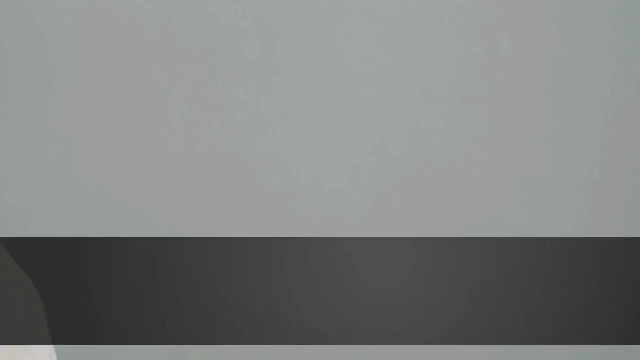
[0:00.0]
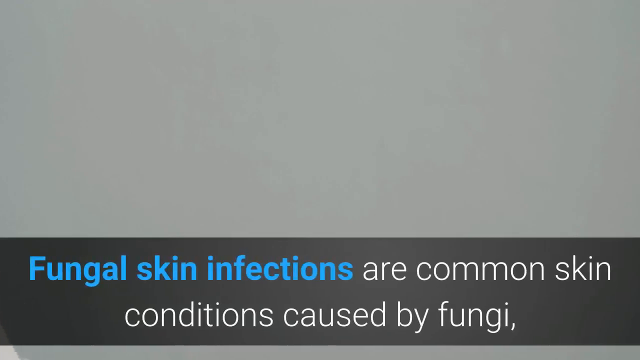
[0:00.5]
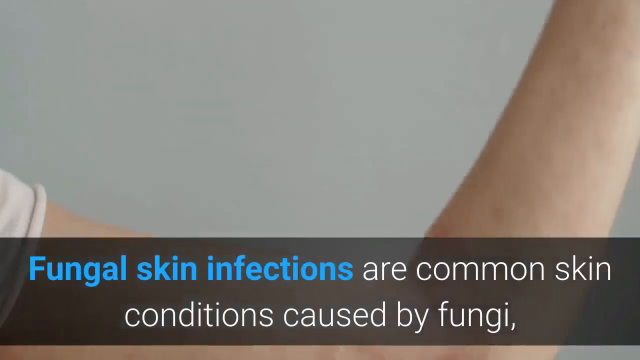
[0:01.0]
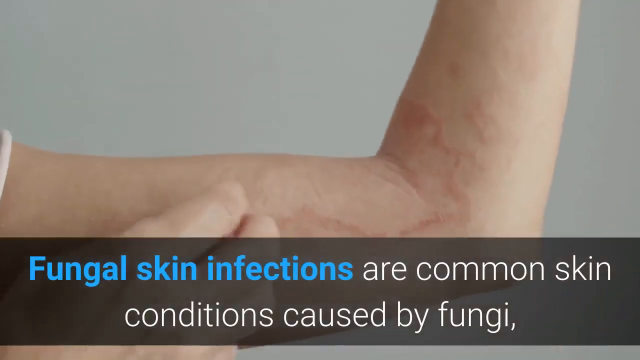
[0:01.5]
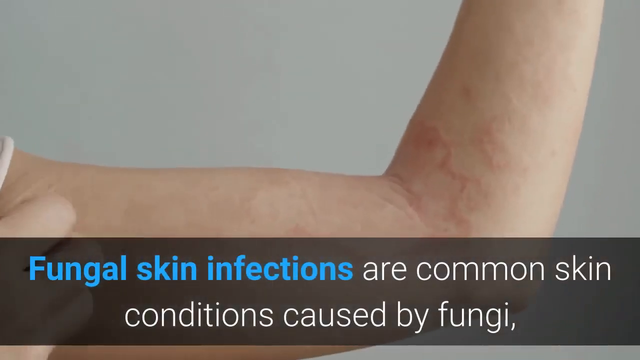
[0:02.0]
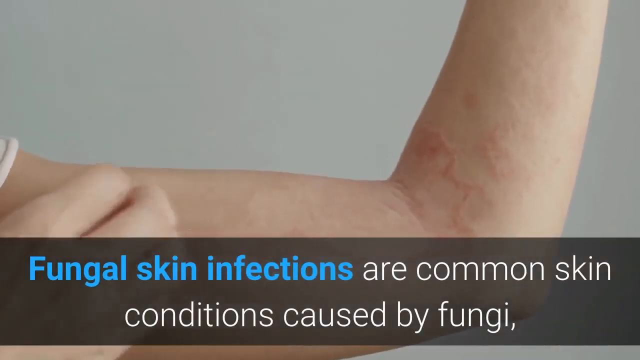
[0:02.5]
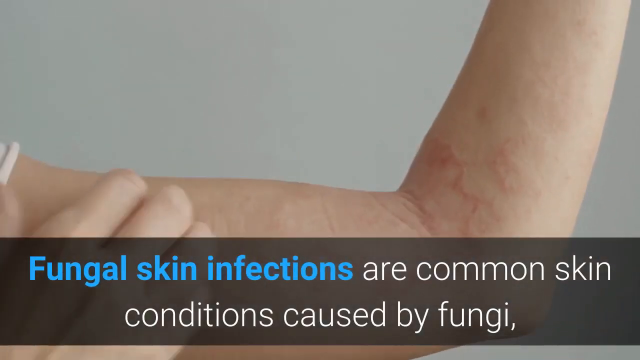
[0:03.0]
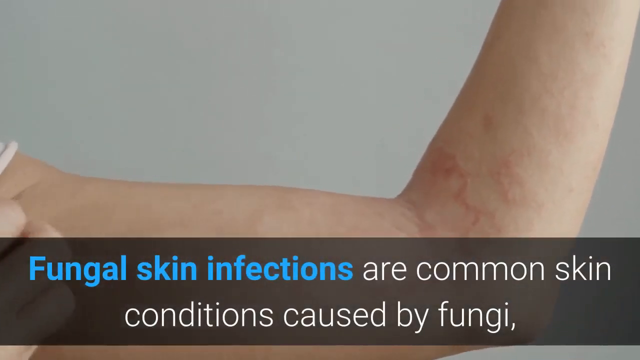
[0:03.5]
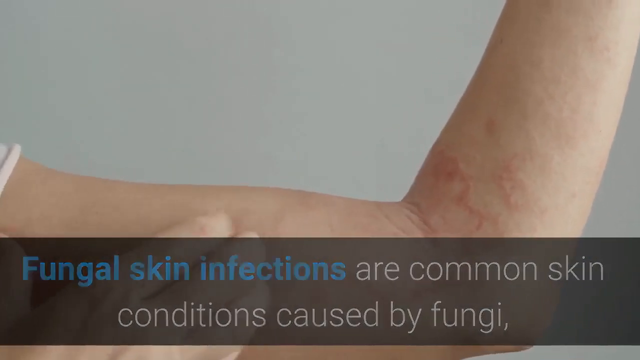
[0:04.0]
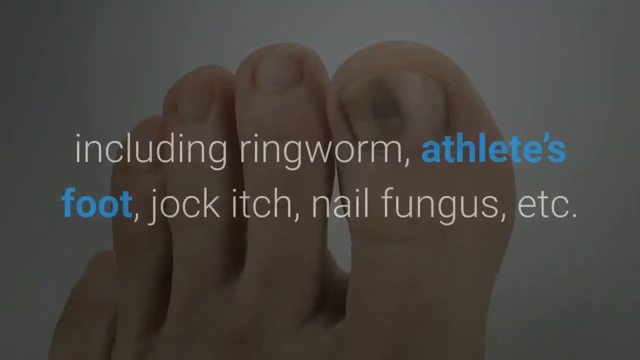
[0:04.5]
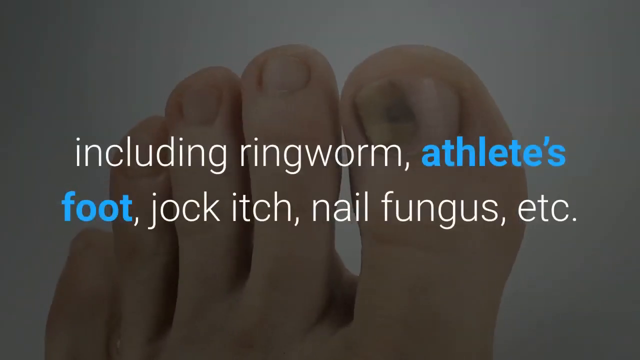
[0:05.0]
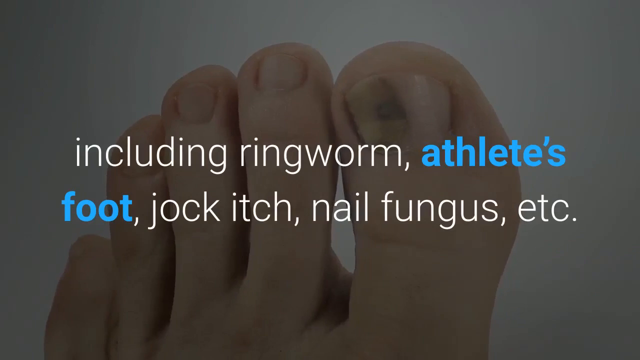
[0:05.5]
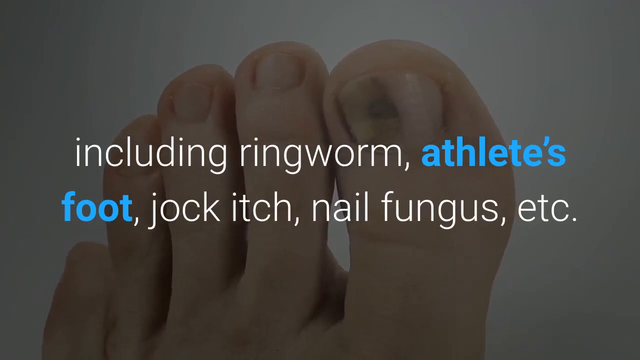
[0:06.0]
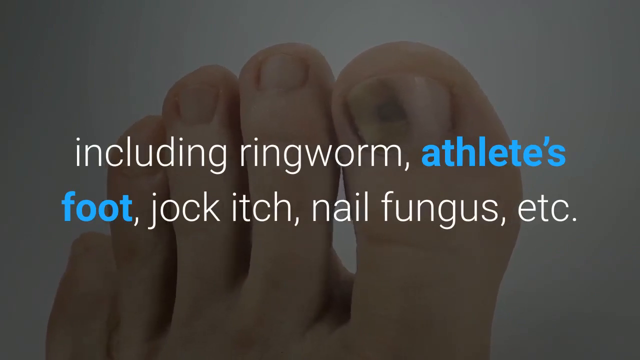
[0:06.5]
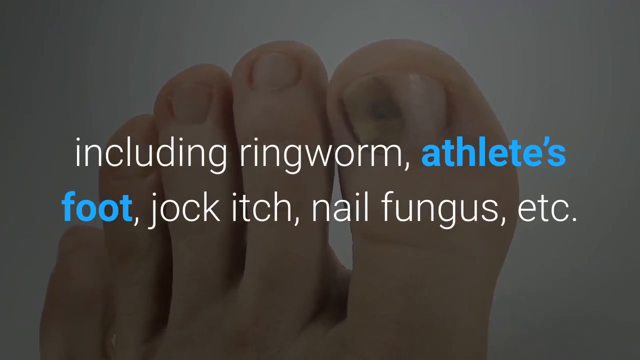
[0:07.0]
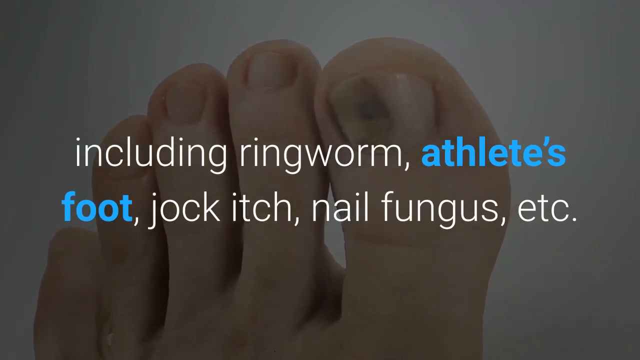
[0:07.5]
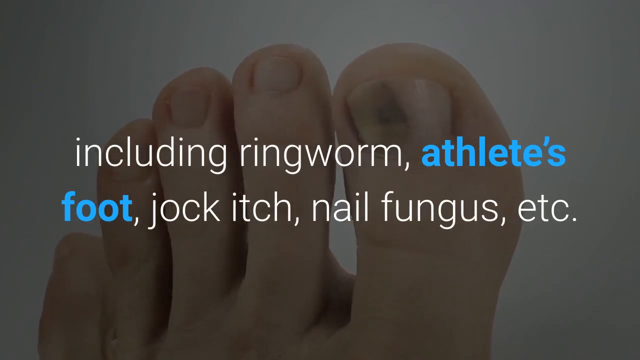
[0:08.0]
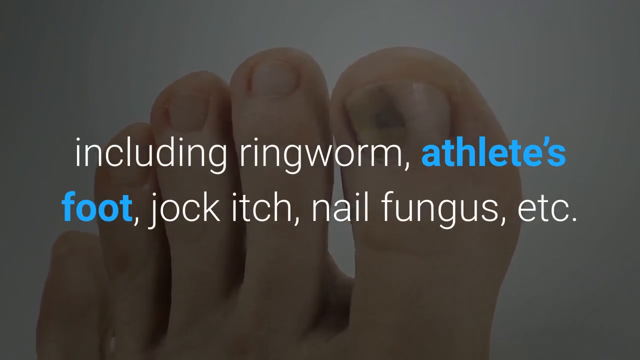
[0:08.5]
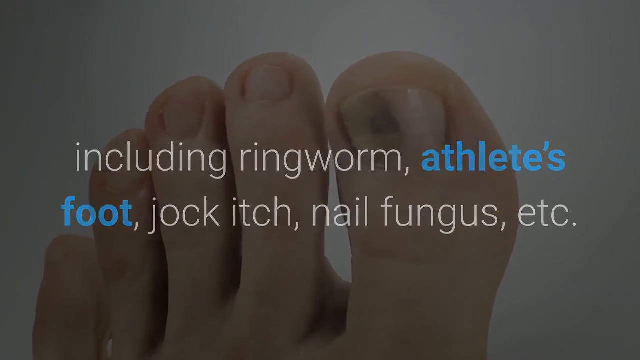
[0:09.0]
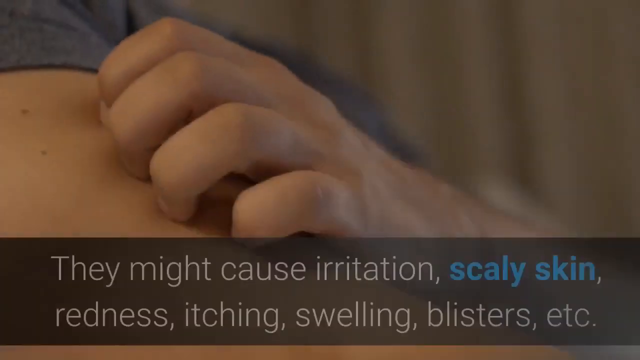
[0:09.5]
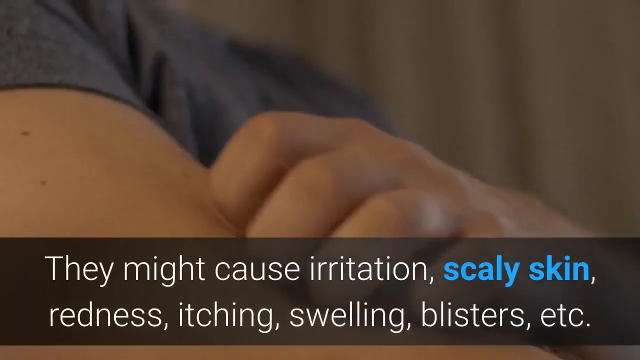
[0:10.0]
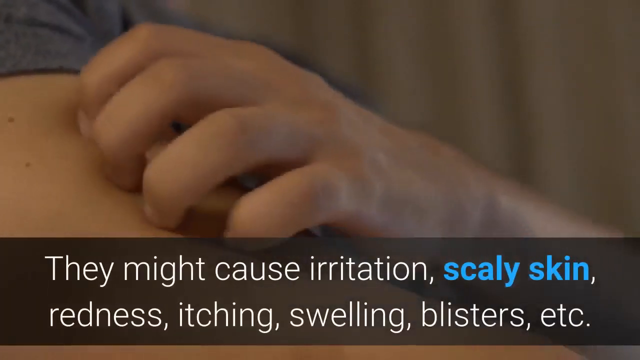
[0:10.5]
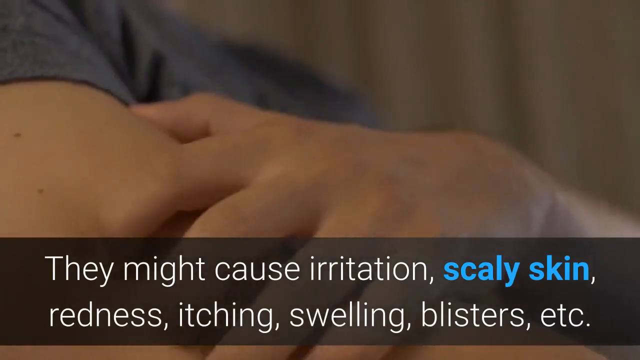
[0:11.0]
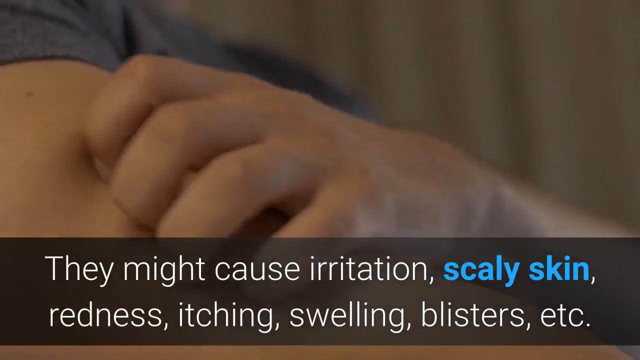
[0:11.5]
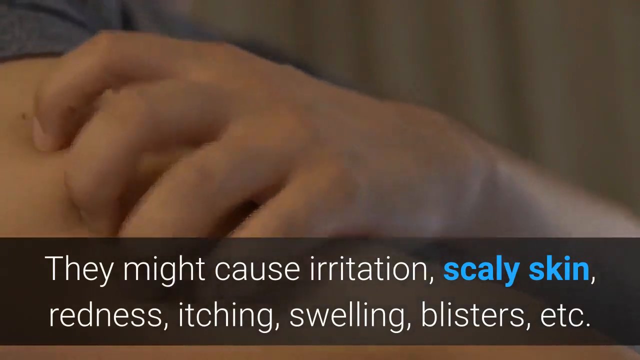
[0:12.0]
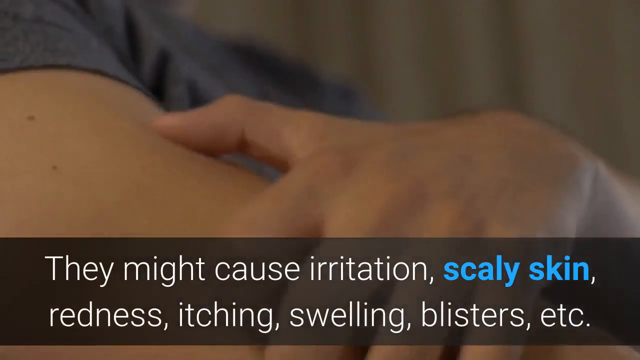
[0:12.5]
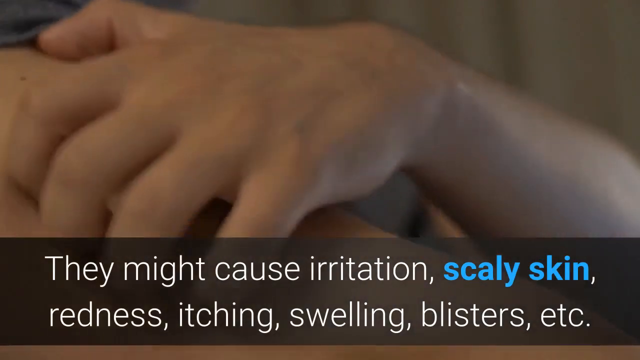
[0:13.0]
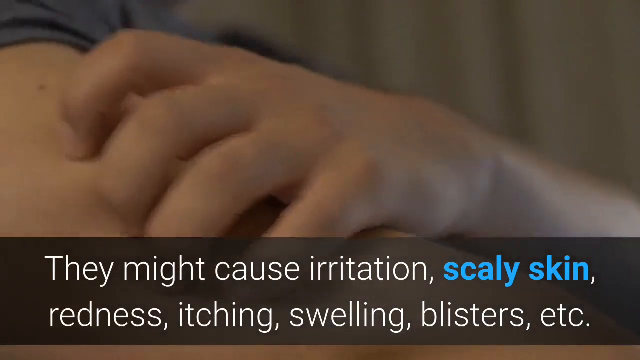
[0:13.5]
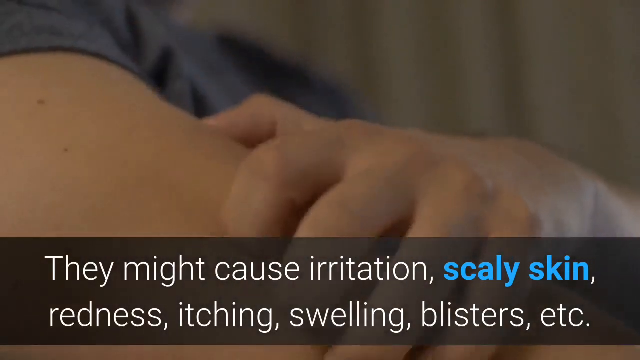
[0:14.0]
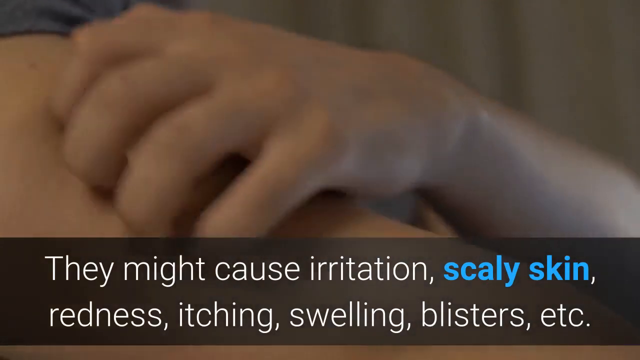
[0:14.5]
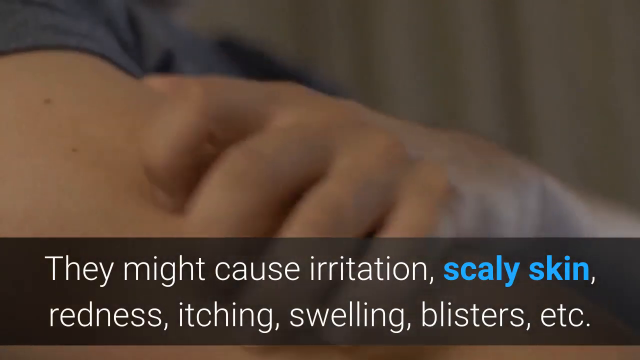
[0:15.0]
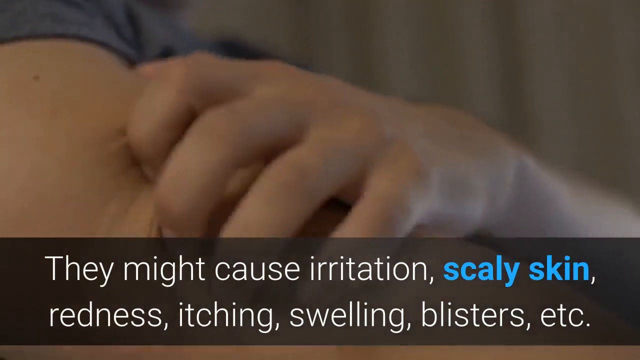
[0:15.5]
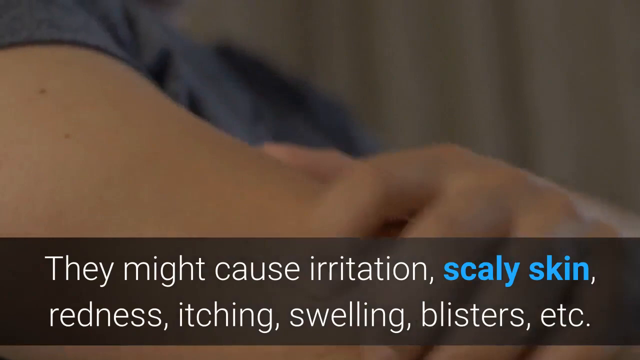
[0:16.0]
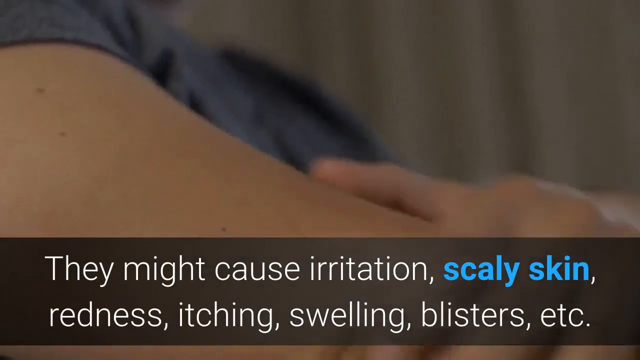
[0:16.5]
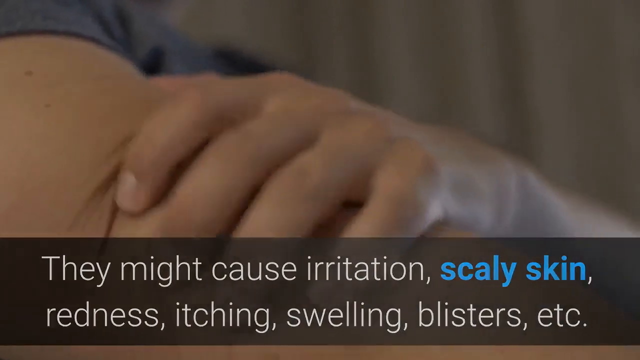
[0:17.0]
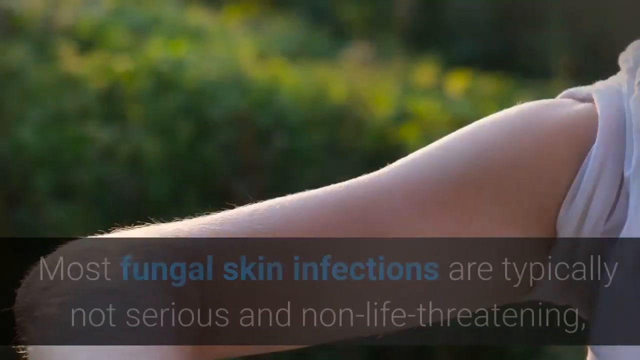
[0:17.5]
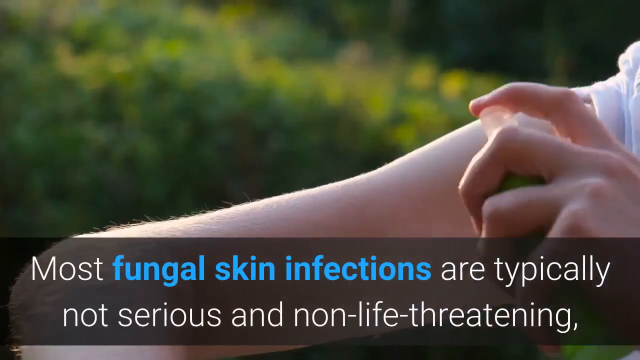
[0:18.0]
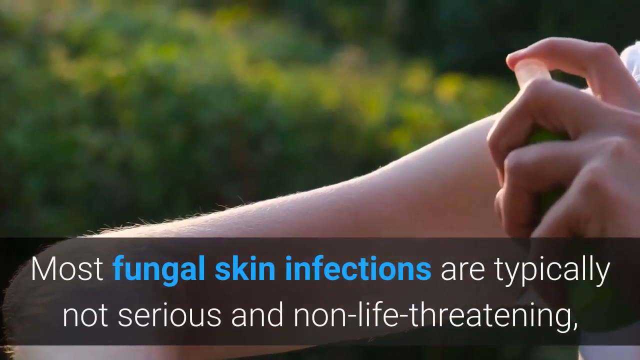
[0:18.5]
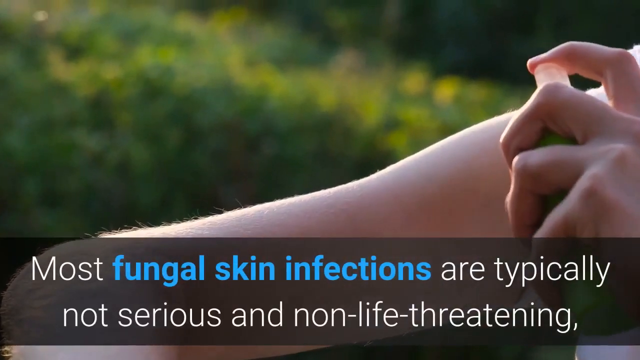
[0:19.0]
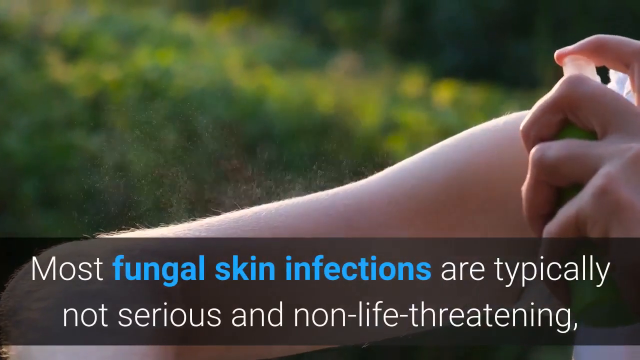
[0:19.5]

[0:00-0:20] Text and then video appear. A black banner at the bottom reads "fungal skin infections are common skin conditions caused by fungi", with "fungal skin infections" in blue and the rest in white. Behind the text is a person's arm, shown from the upper arm to just before the wrist. The arm is bent so the upper arm is horizontal and the lower arm vertical. The person has their left arm raised and scratches the upper arm with their right hand. A white sleeve cuff is visible at the far left, and the person is Caucasian based on their skin color. Next comes a set of well-manicured toes held vertically, with text in the middle of the screen reading "including ringworm, athlete's foot, jock itch, nail fungus, etc." The toes move just a little. A new screen shows a person's right upper arm being scratched by their left hand in an up-and-down motion, while a translucent black banner at the bottom reads "they might cause irritation, scaly skin, redness, itching, swelling, blisters, etc.", all in white except "scaly skin" in blue. An arm with Caucasian skin is then held perpendicular to the body, and a hand on the right side of the screen, either the person's left hand or possibly someone else's, holds a green bottle with a white cap and sprays from it onto the arm.